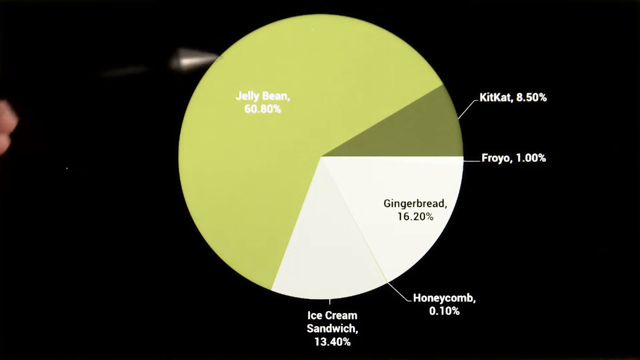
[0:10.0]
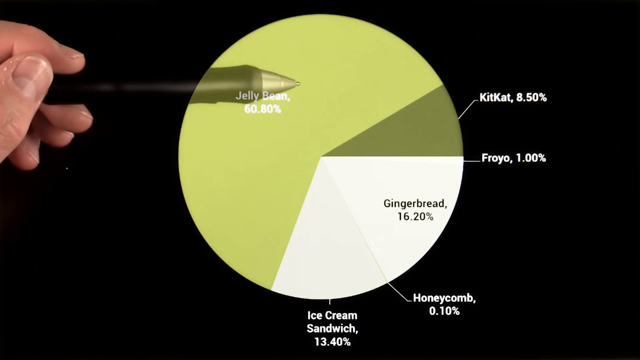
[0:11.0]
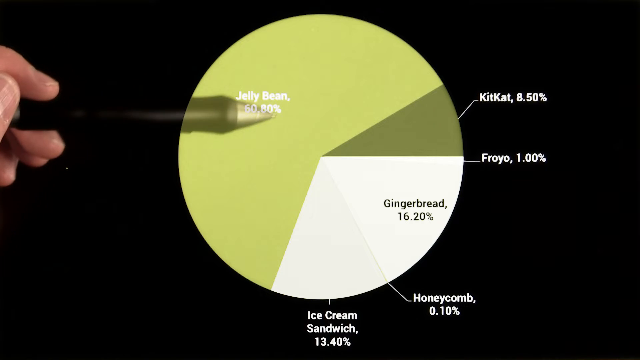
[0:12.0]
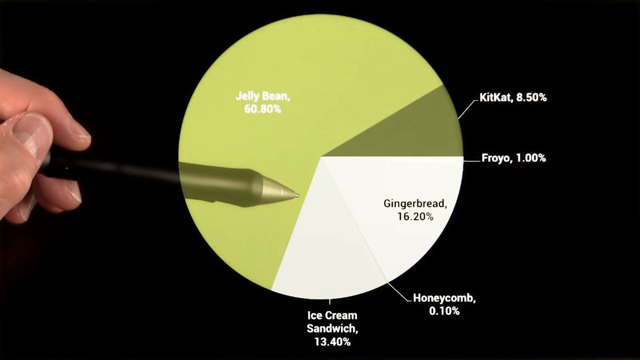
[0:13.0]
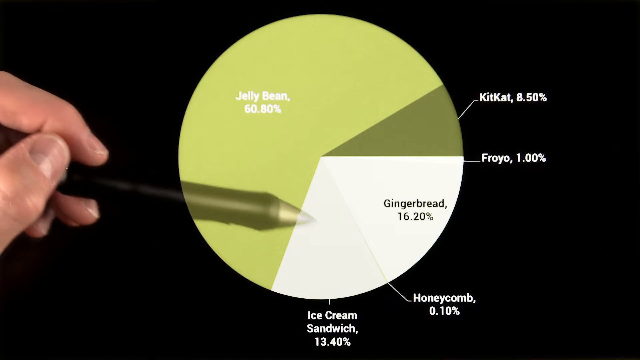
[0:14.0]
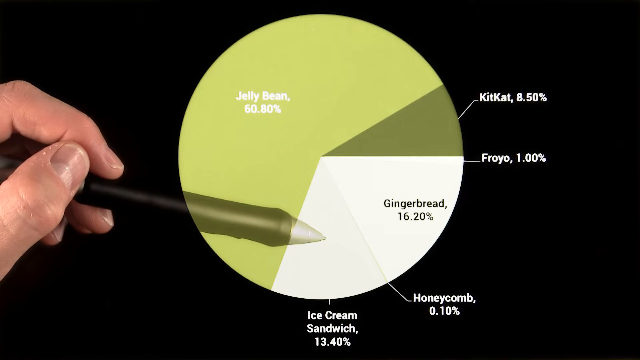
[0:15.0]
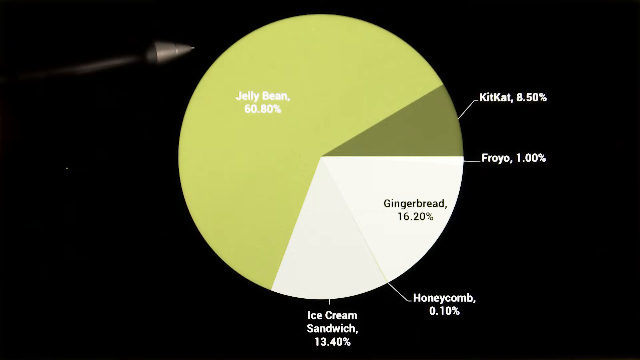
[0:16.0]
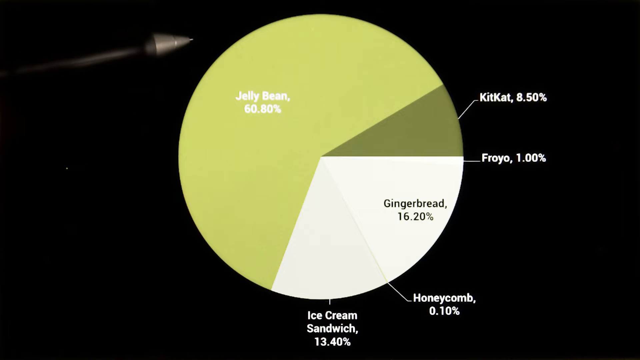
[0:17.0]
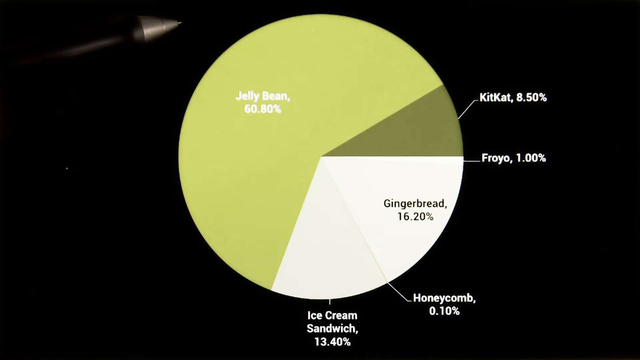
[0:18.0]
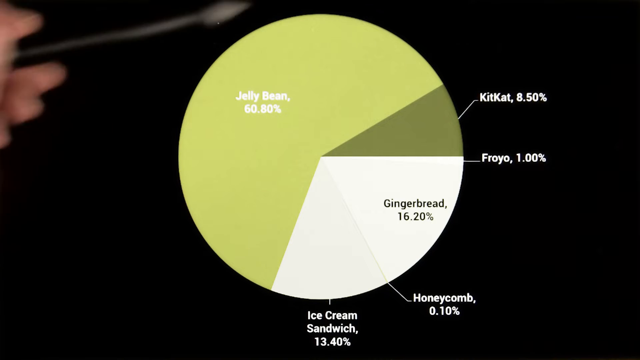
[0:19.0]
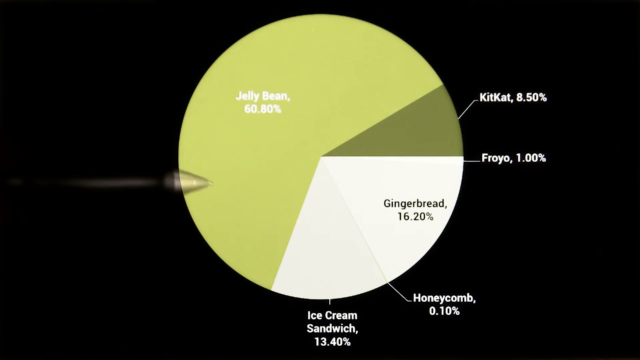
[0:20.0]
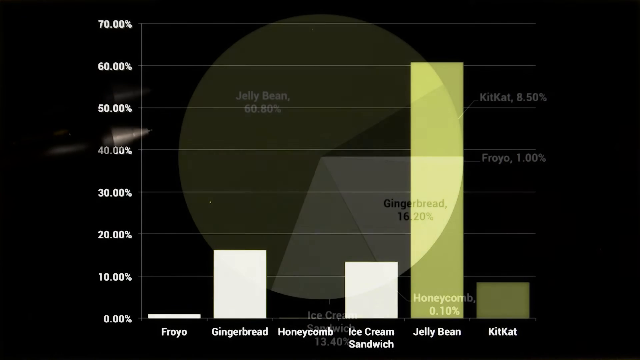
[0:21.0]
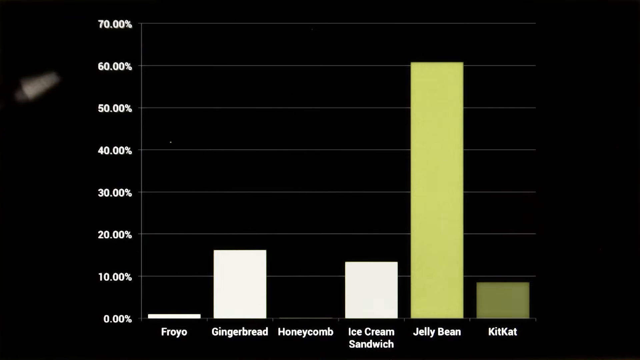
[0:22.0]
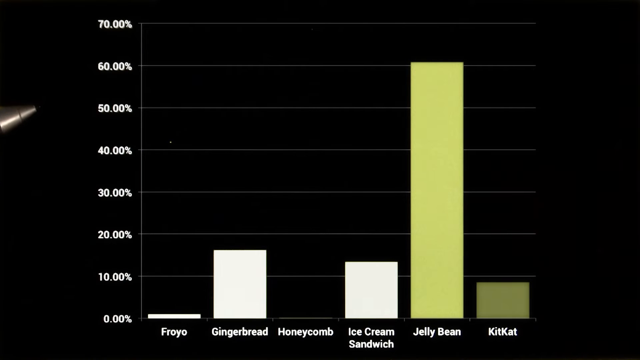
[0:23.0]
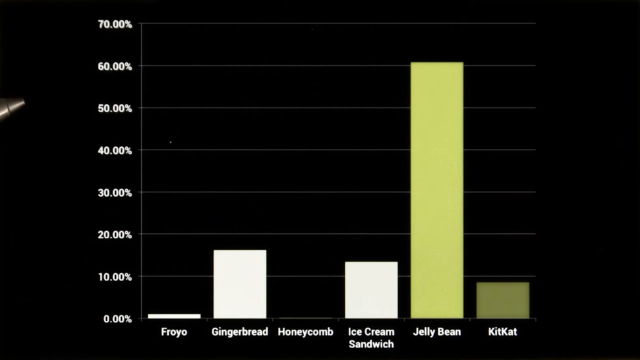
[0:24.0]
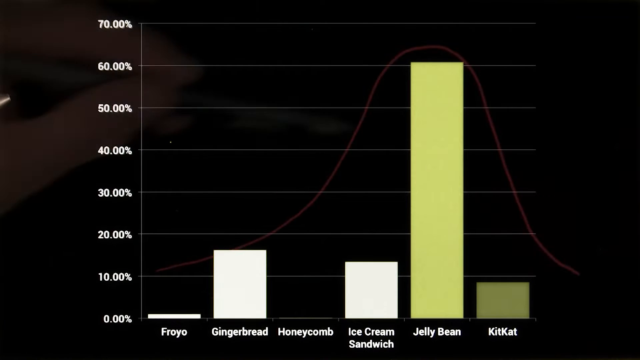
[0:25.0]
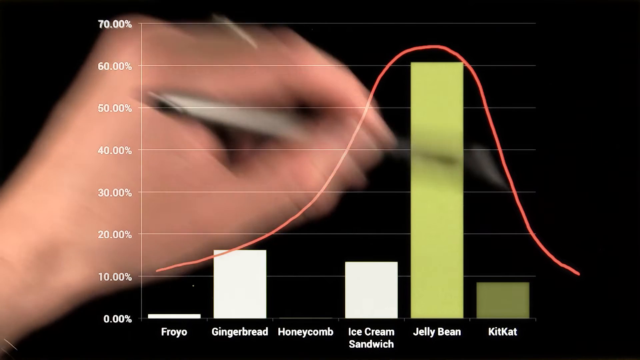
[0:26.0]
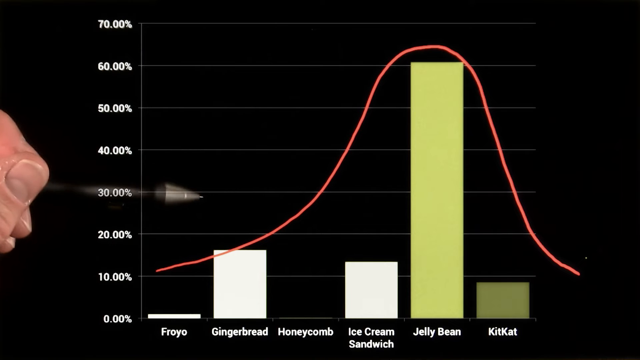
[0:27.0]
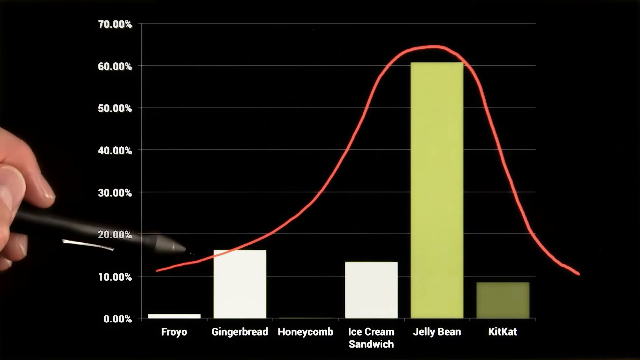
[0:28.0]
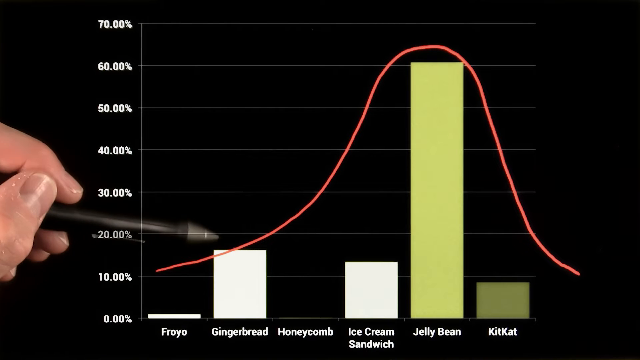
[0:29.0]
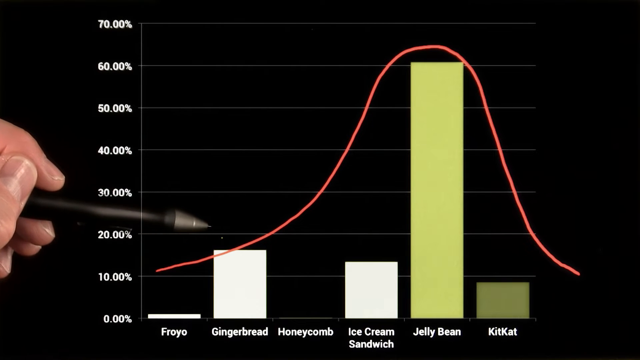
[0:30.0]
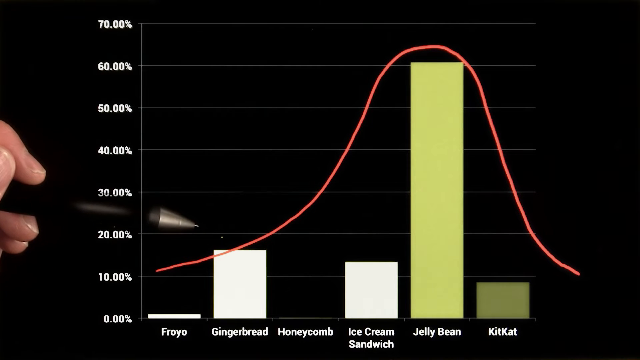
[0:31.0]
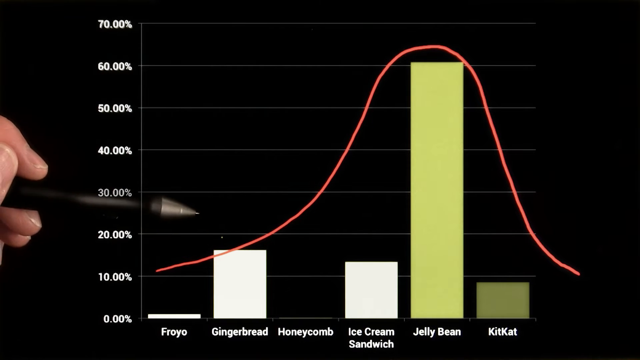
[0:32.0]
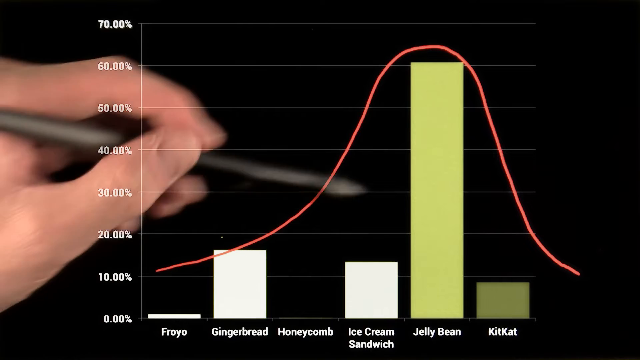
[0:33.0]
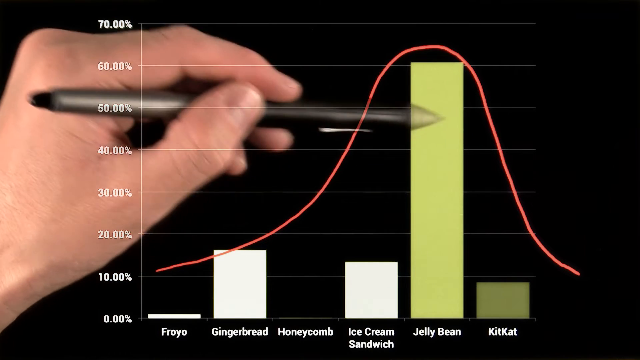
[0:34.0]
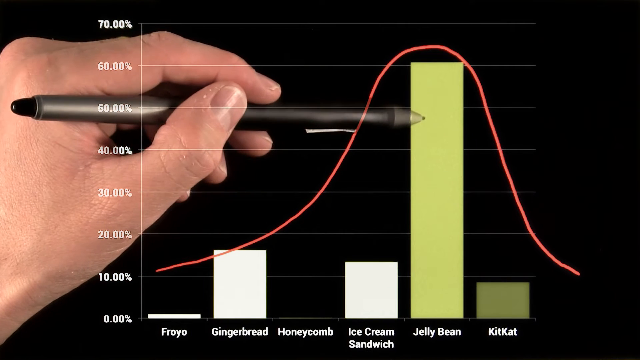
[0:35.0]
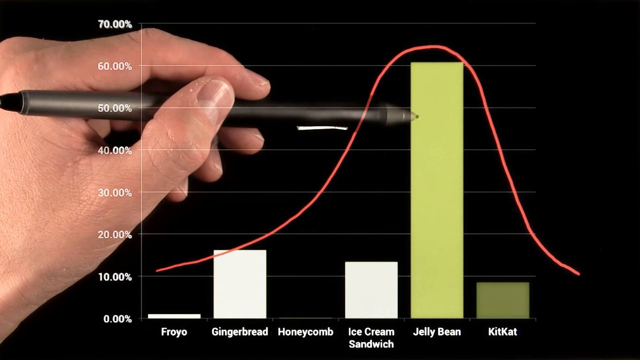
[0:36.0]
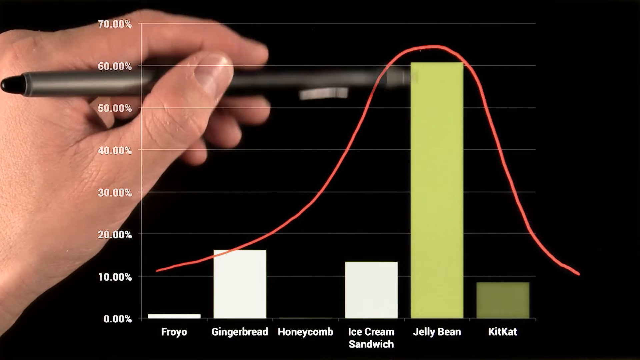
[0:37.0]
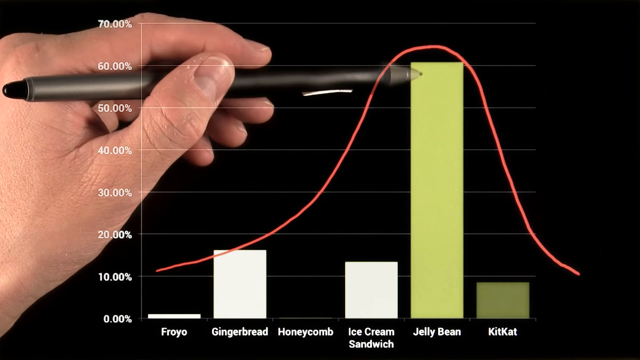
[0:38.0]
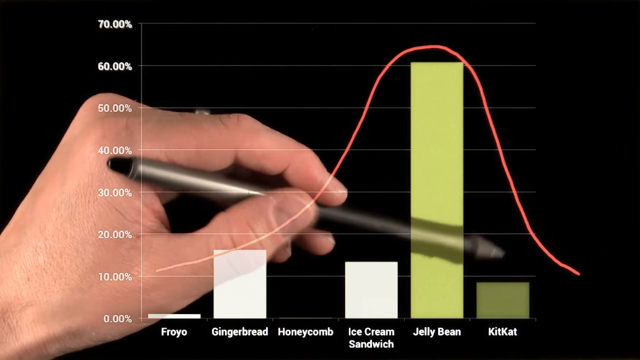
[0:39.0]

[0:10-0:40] The ice cream sandwich section is labelled 13.4%. Next to it is a very thin bar in another shade of light green; every label has a pointer from the chart to its text, and this one reads "honeycomb, 0.10%". A larger section leads from halfway down the right-hand side, with "gingerbread, 16.2%" in a dark green or black font. Between that and Kit Kat is another thin slice of the pie, labelled "broil, 1%" outside the chart on the black background. An individual's left hand then appears, with the thumb visible, holding a pen between thumb and forefinger. He points the pen to the area with the Jelly Bean text, moves it down into the ice cream sandwich part of the pie chart, and rotates it counterclockwise around the chart. The video then comes to a bar graph with horizontal and vertical axes.